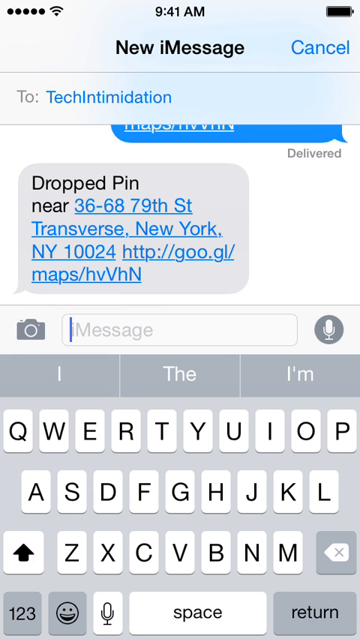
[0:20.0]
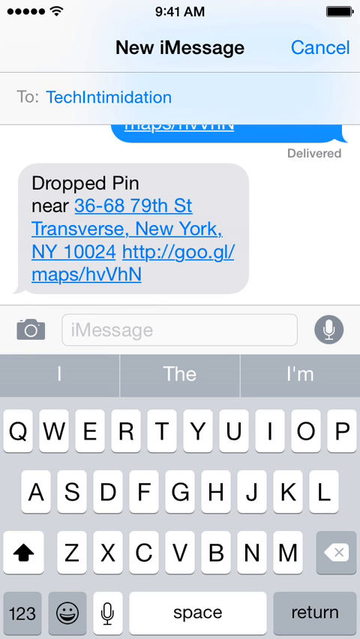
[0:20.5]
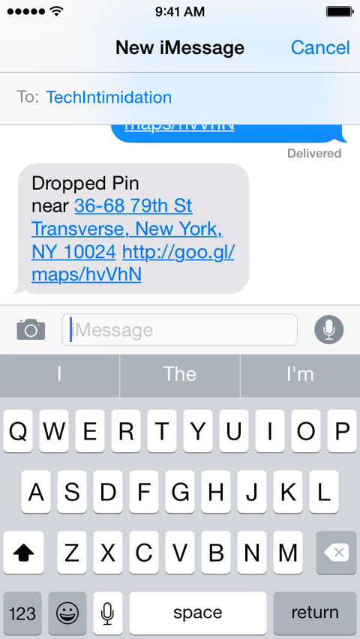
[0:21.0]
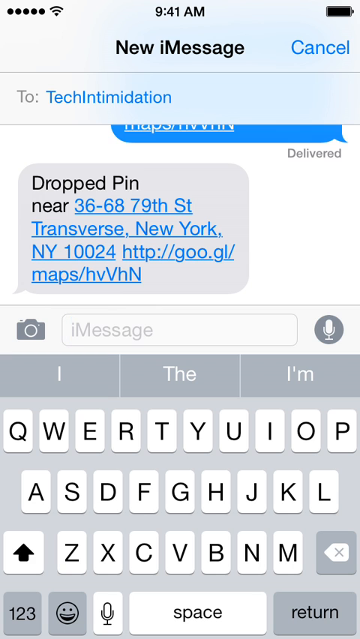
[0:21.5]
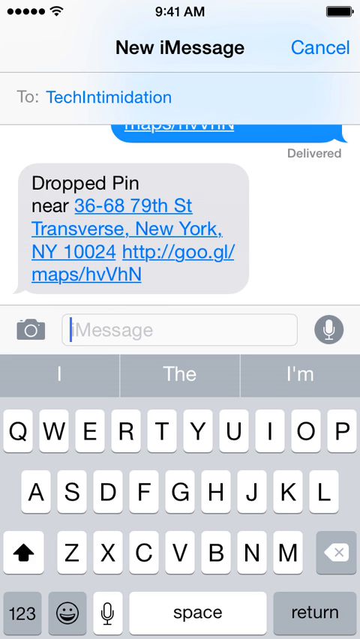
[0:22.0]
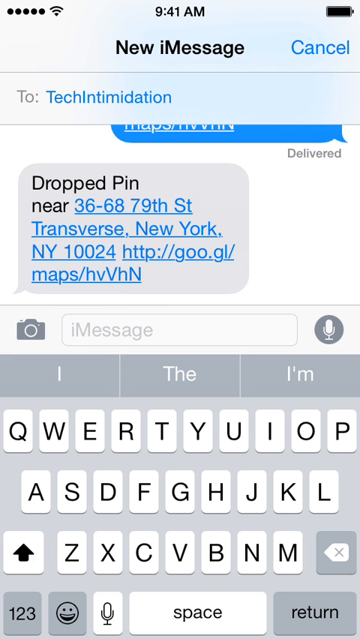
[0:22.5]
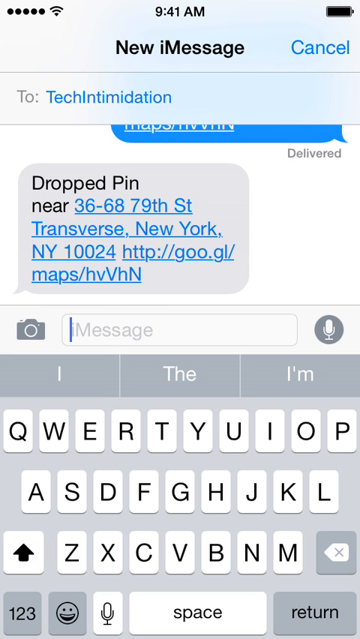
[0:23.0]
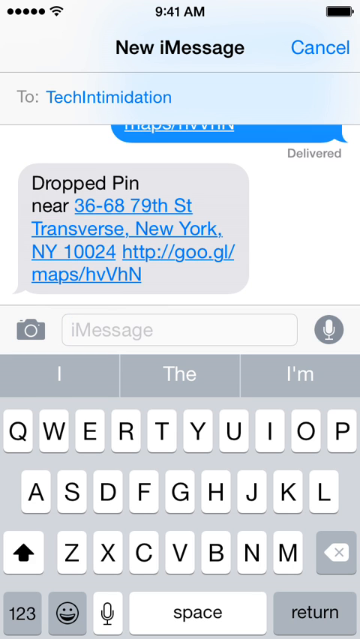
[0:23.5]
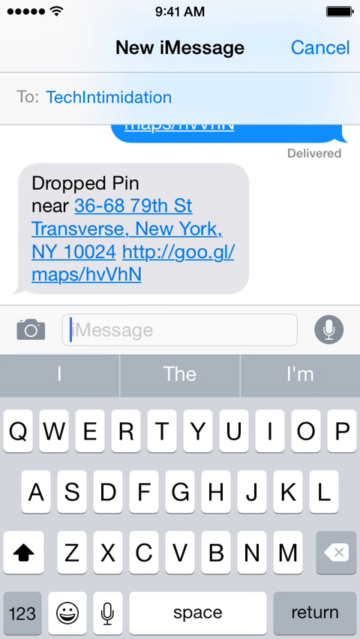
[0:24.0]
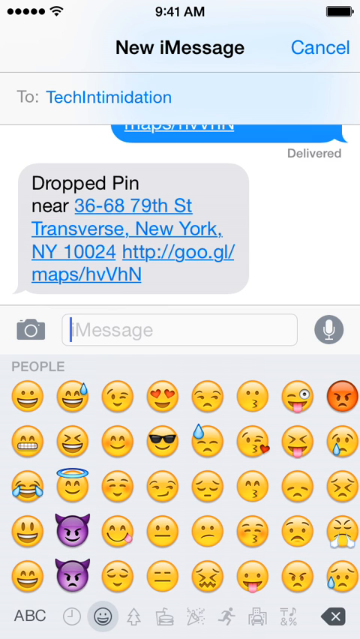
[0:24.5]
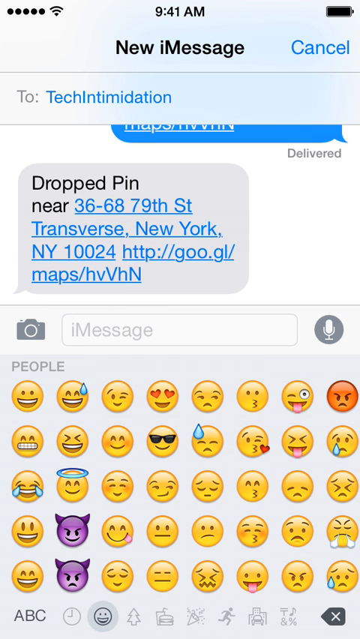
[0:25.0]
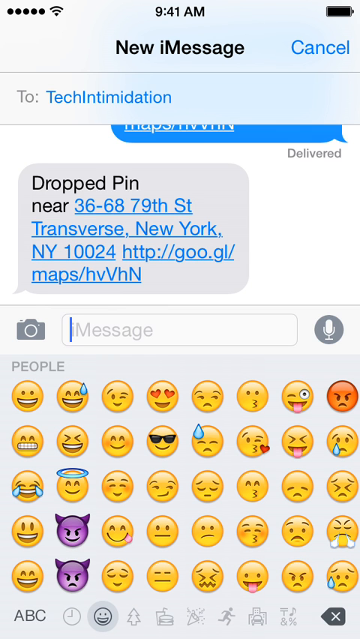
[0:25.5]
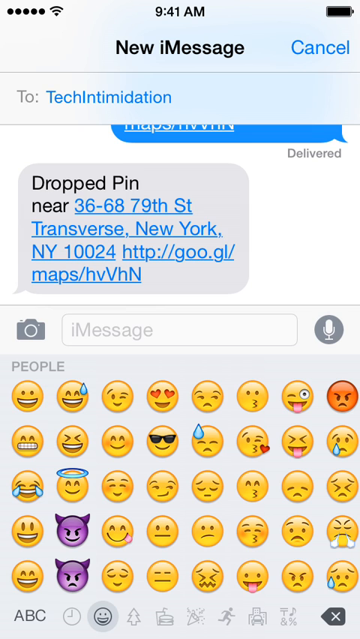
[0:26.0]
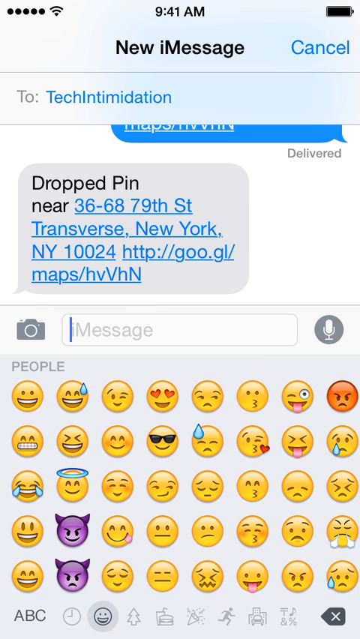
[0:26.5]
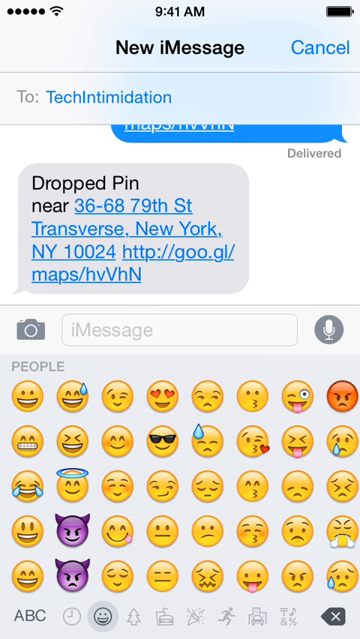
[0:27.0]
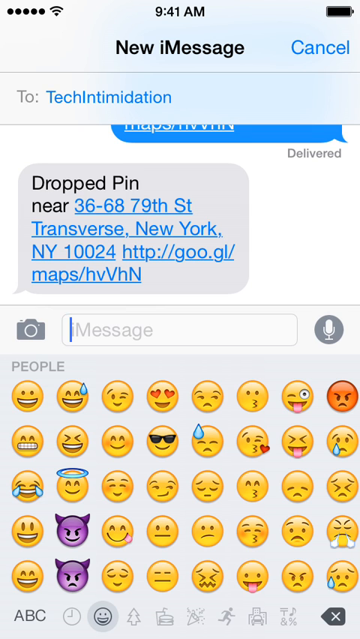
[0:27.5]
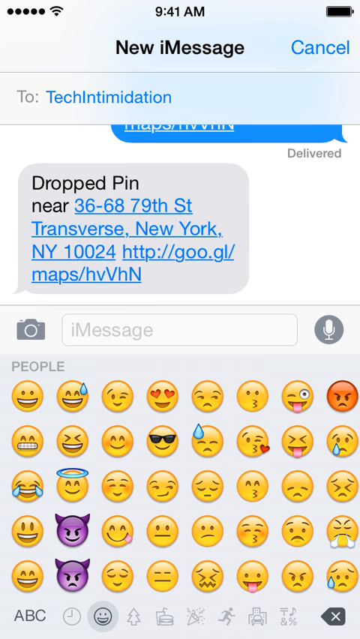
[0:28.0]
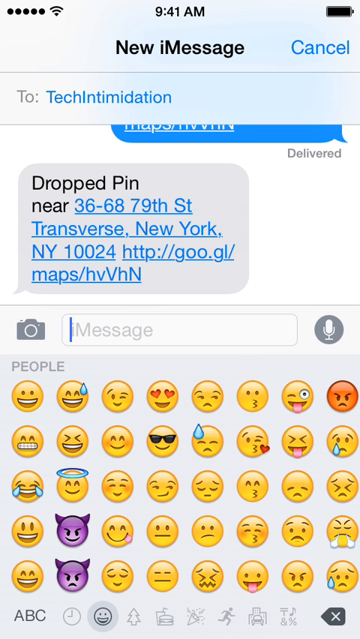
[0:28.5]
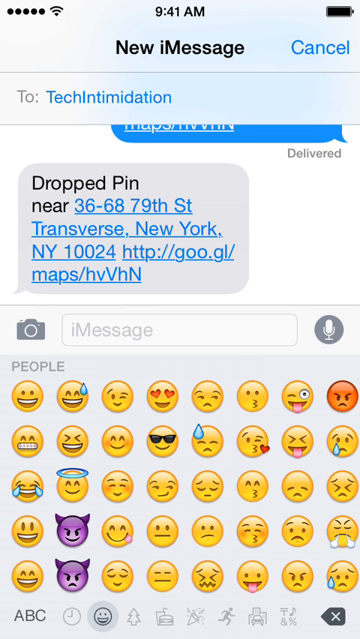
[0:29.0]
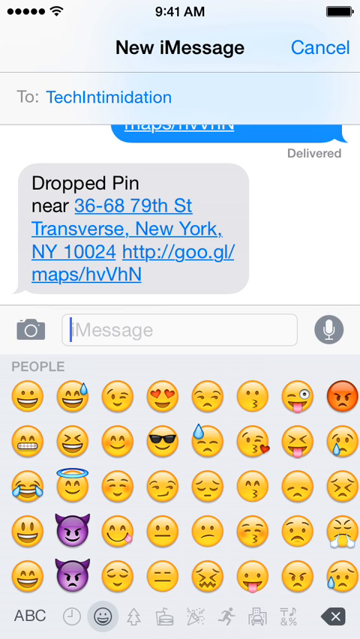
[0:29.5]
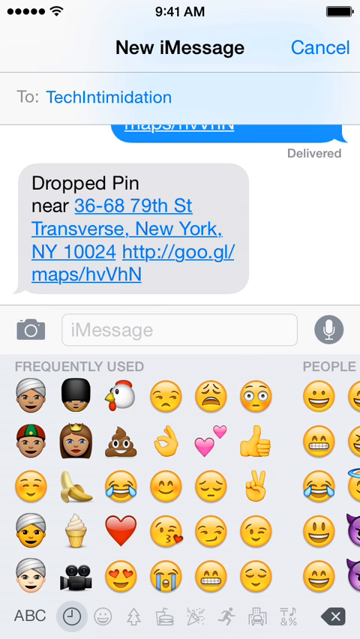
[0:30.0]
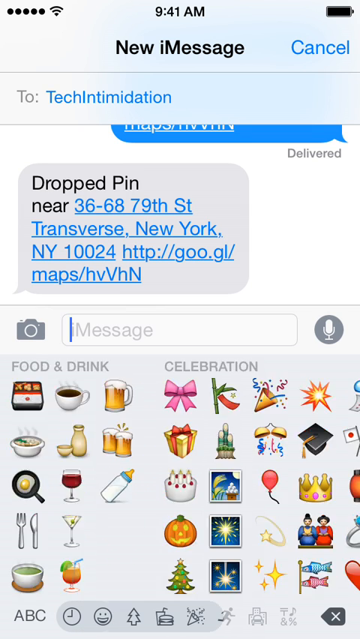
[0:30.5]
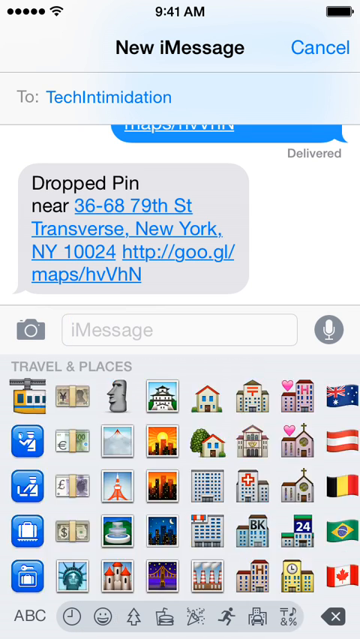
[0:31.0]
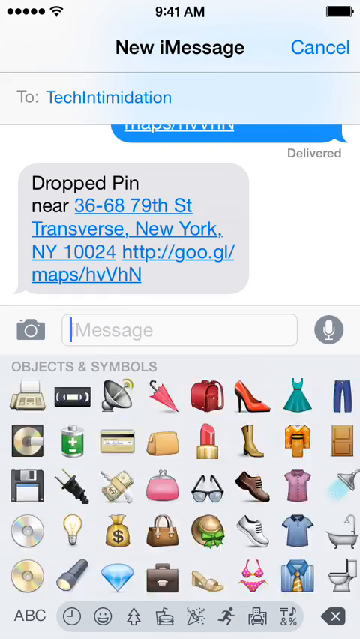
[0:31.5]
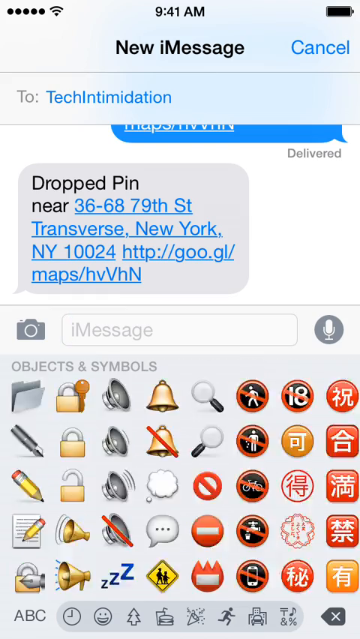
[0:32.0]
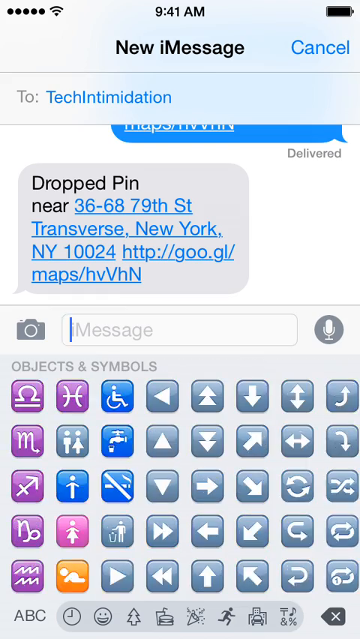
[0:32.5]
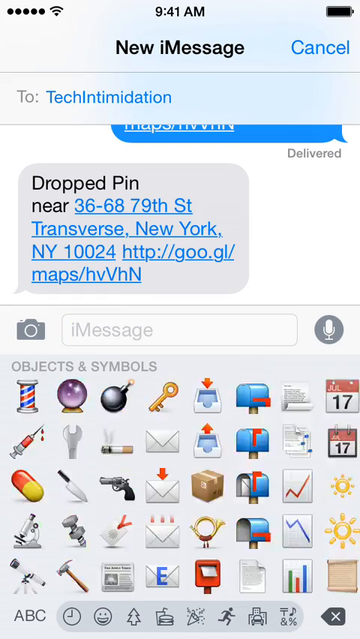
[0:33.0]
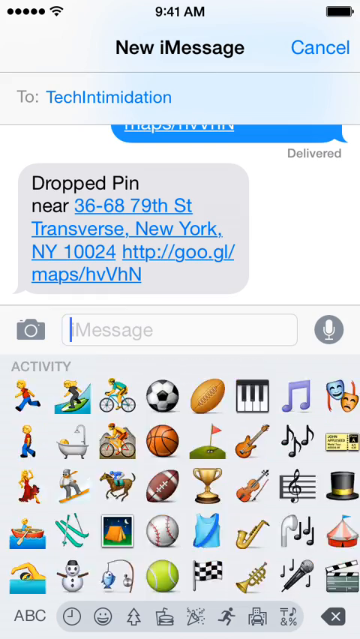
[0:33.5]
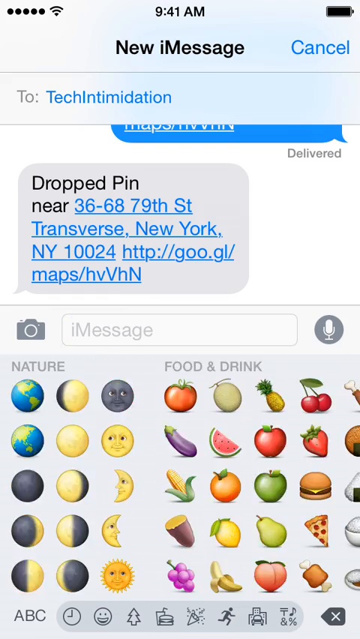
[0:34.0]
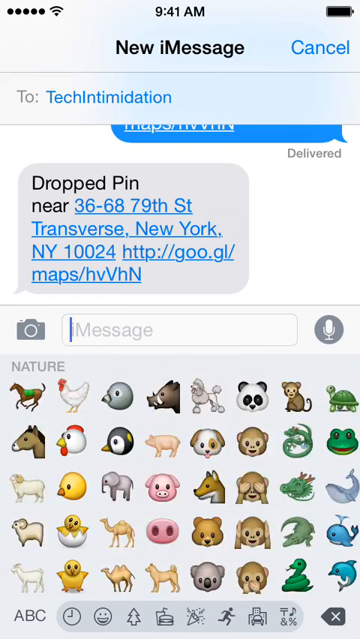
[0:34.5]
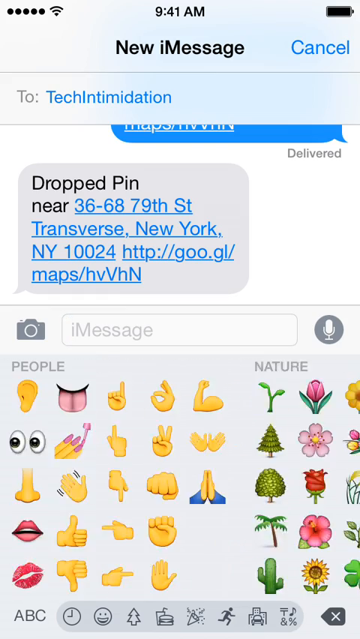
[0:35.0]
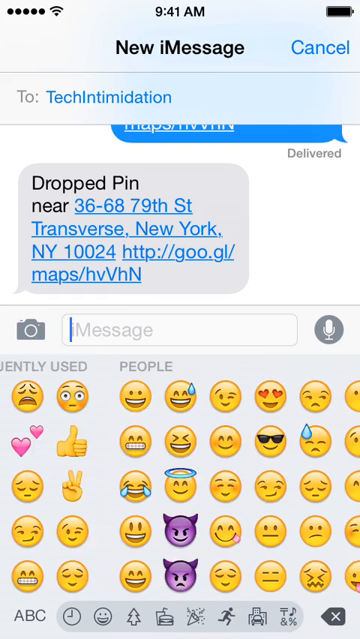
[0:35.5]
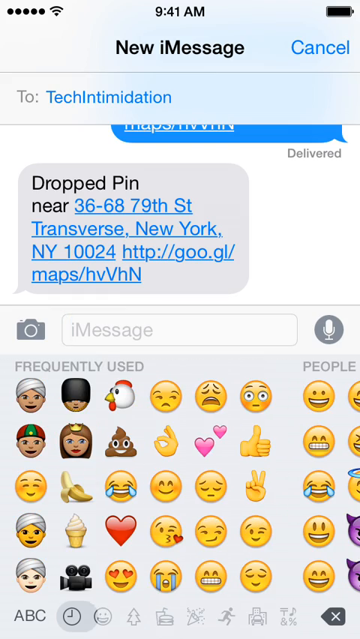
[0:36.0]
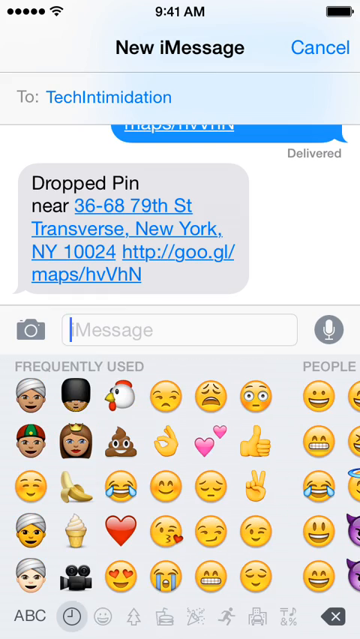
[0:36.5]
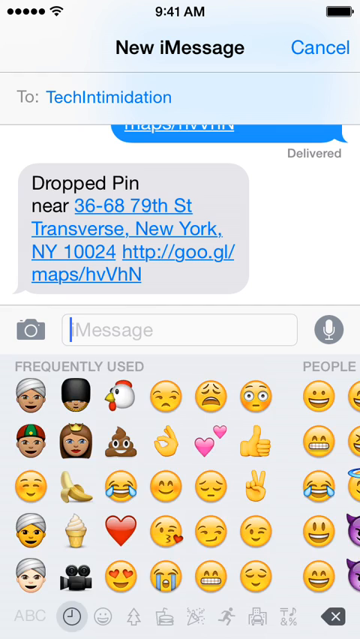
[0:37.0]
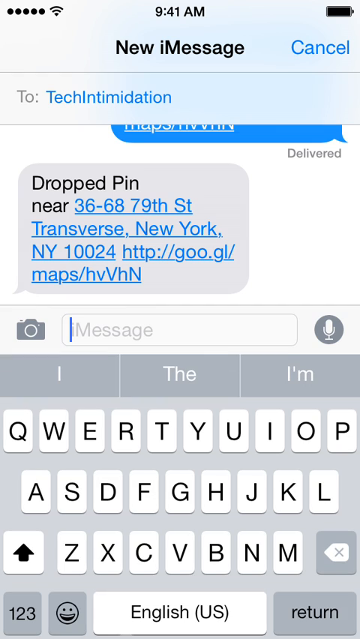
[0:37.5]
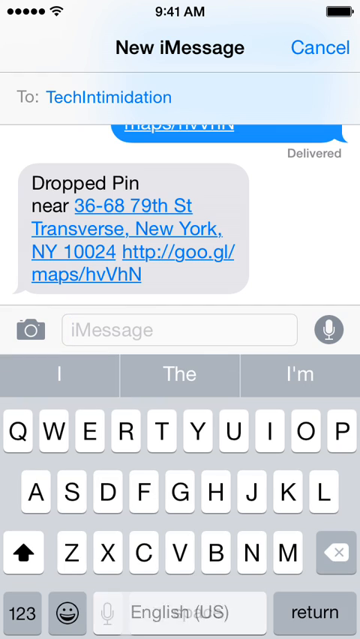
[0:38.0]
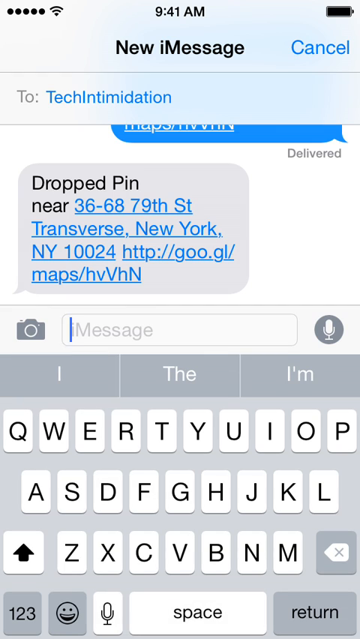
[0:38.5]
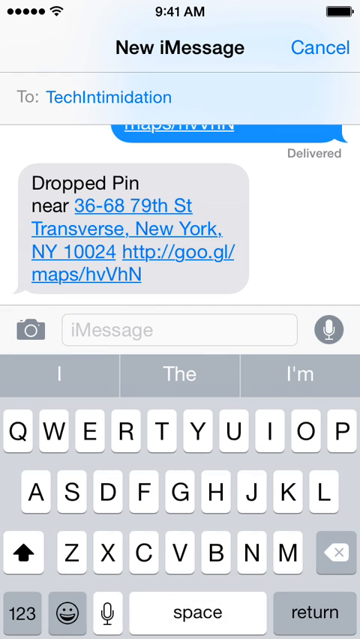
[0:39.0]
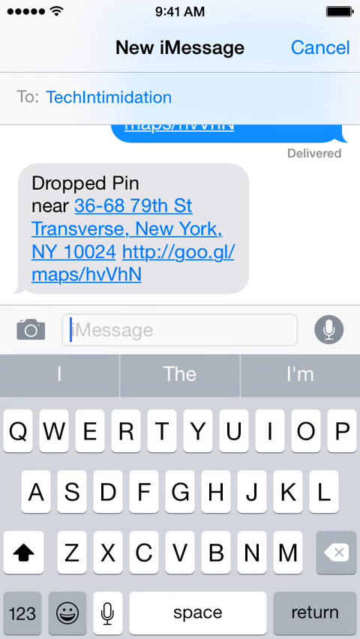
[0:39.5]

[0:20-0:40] In iMessage, the user opens the emoticons, showing the small emotes from a smiley face to a crying face, a cool face, a heart face and more. The user scrolls from right to left, going through all the emoticons before returning to texting, and does not seem to choose anything. As they scroll, different characters appear, then a sports or activity section, a celebration section with many hearts, a travel and locations section with many vehicles, flags and homes, and an object and symbol section with items such as shoes, clothing, hammers and letters, a no pedestrian walking sign, a bell icon, many arrows, and various signs such as people signs. There is also a nature section with the earth and animals, and a people section with different types of people: cops, engineers, doctors, people waving, people in love, people holding hands and more.